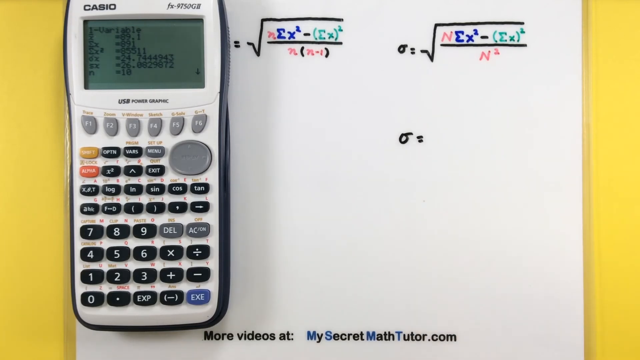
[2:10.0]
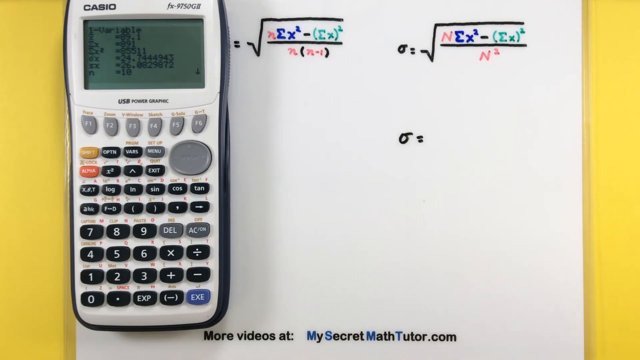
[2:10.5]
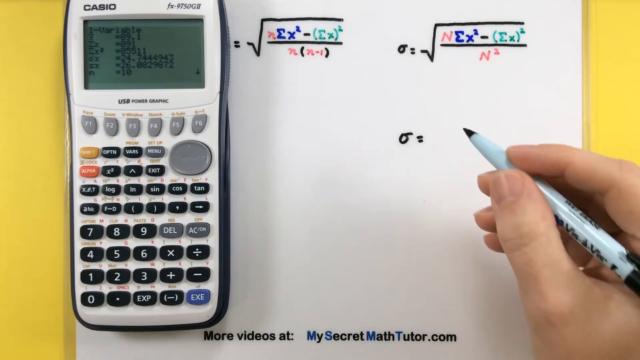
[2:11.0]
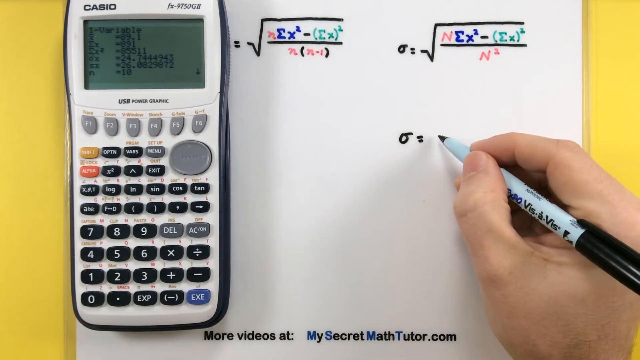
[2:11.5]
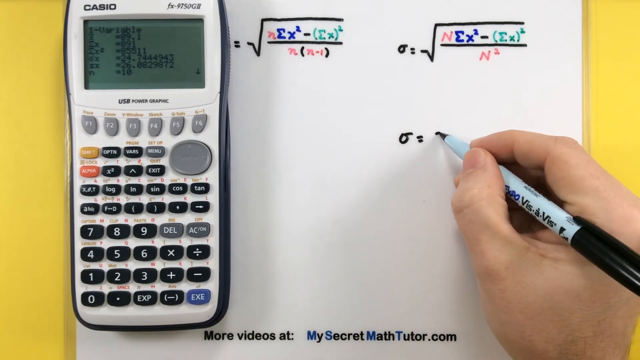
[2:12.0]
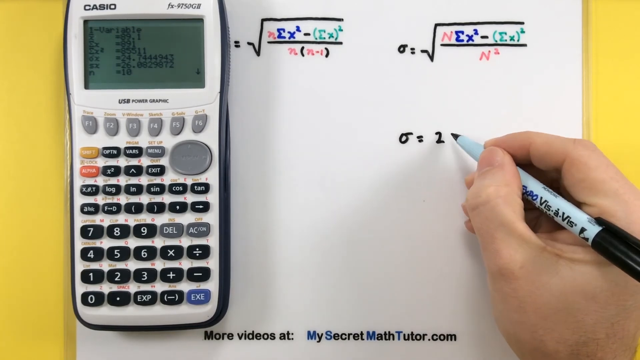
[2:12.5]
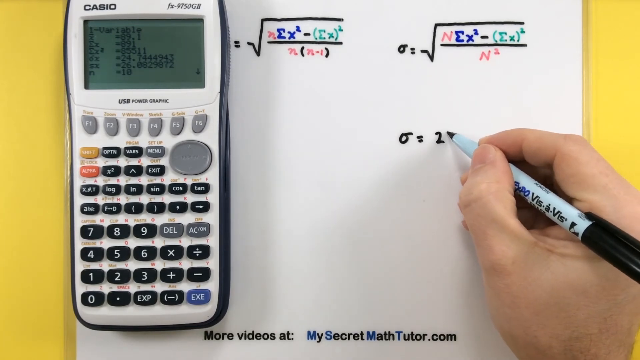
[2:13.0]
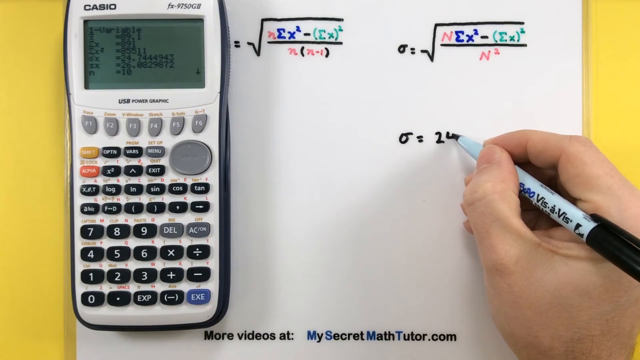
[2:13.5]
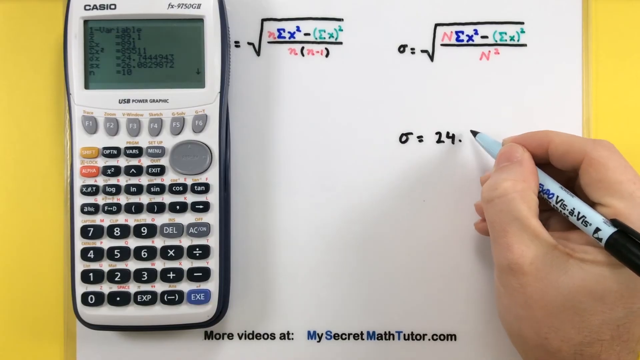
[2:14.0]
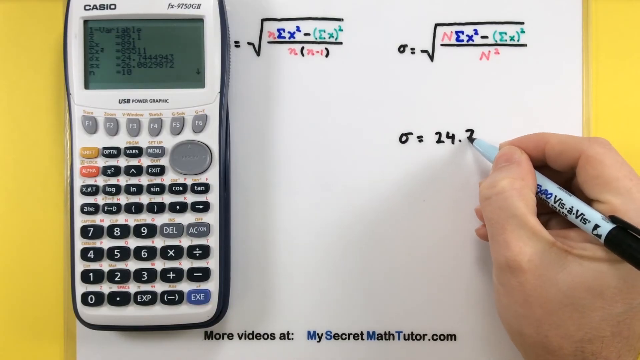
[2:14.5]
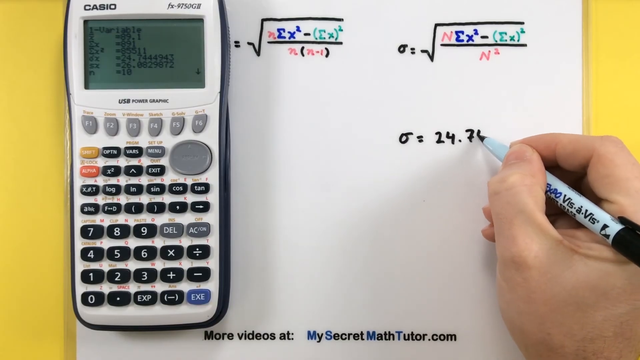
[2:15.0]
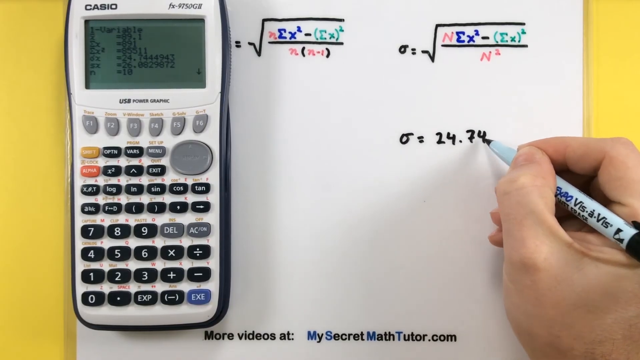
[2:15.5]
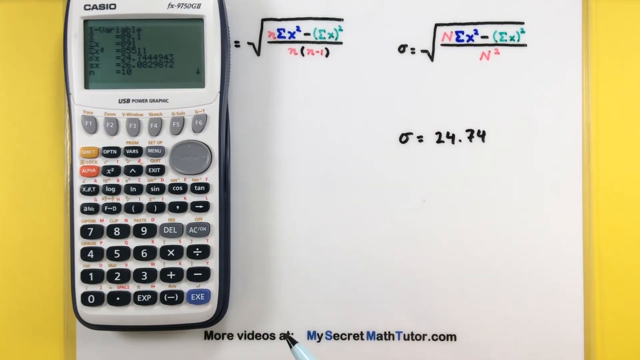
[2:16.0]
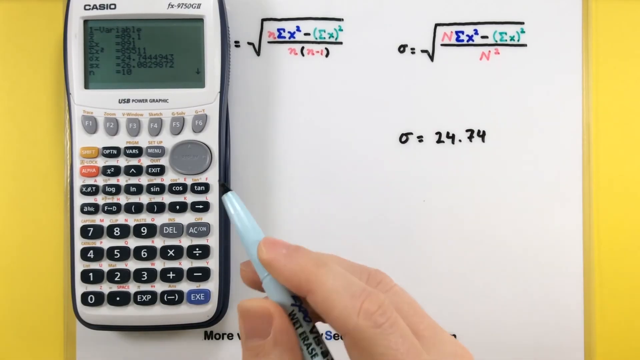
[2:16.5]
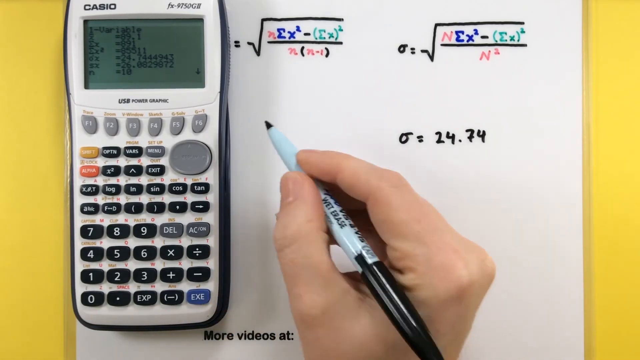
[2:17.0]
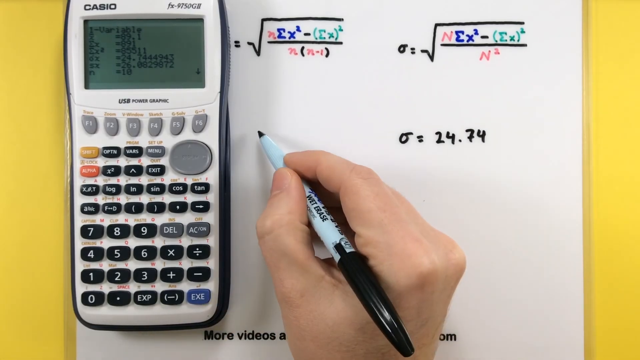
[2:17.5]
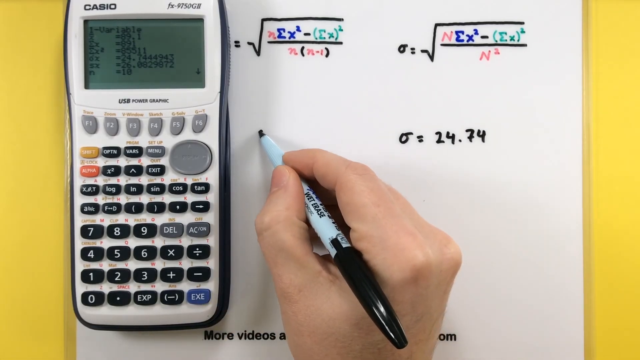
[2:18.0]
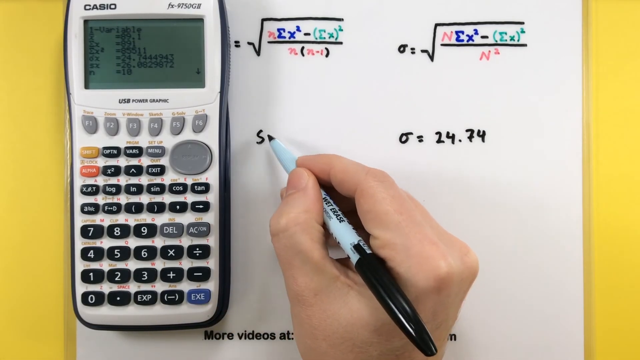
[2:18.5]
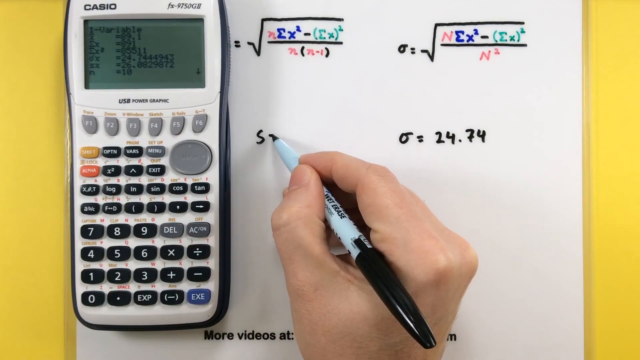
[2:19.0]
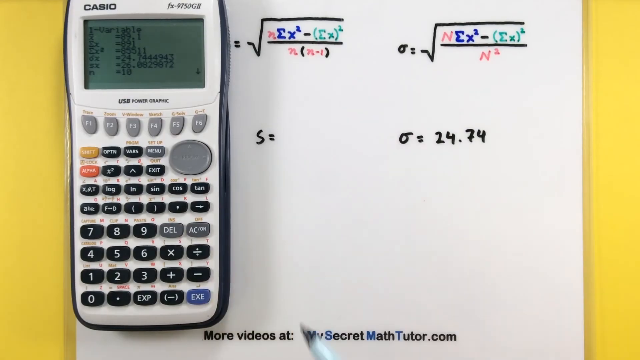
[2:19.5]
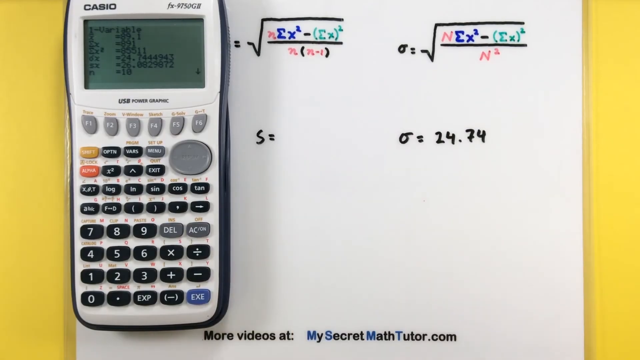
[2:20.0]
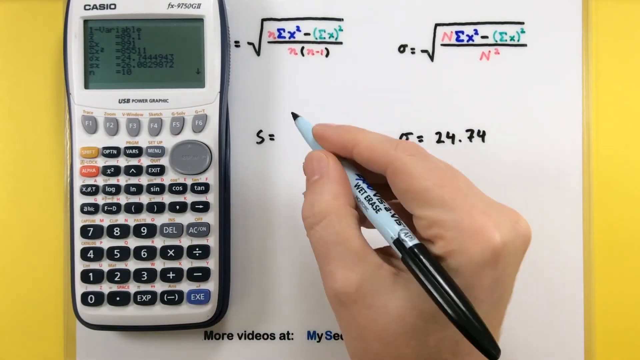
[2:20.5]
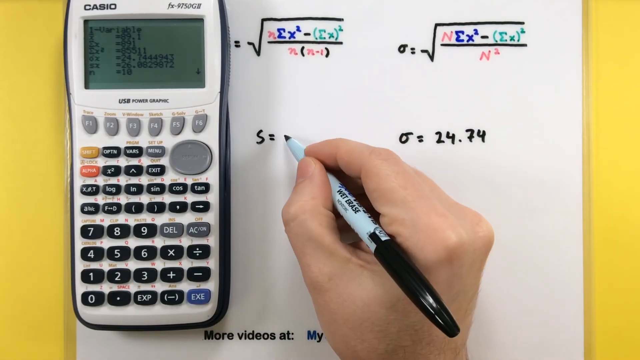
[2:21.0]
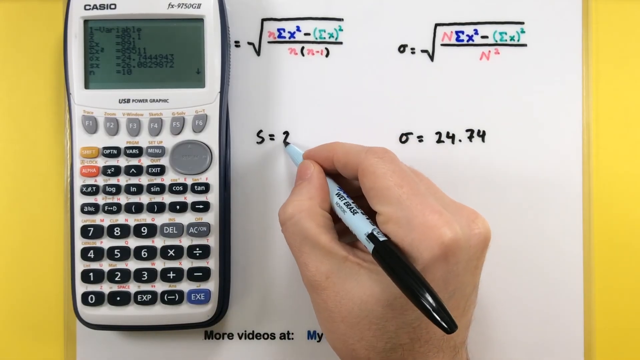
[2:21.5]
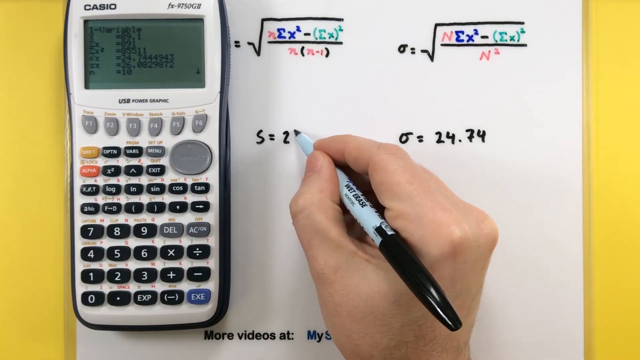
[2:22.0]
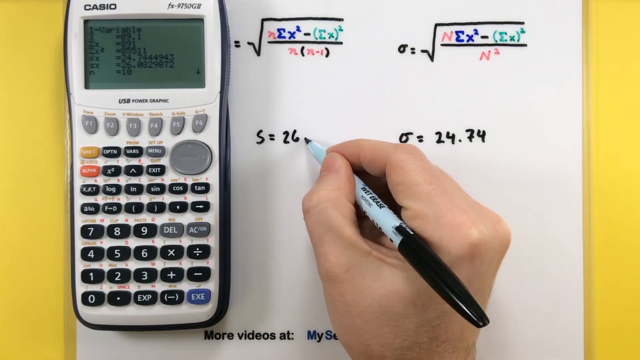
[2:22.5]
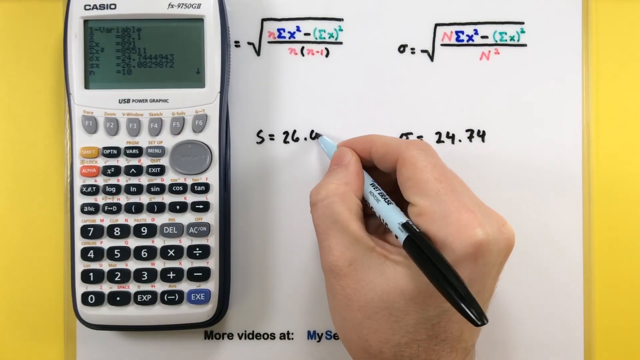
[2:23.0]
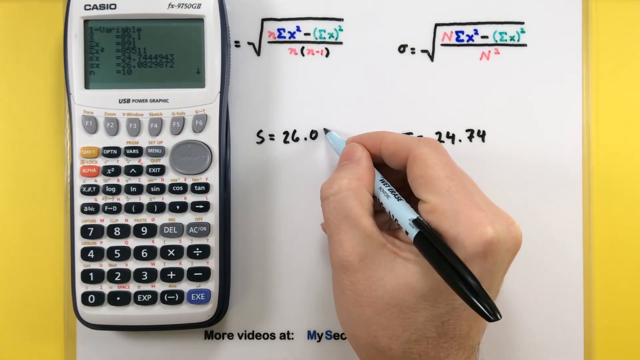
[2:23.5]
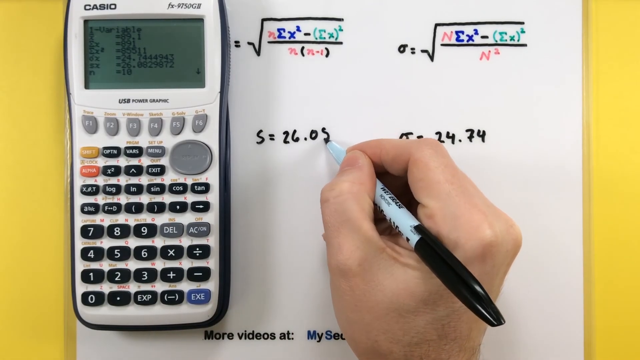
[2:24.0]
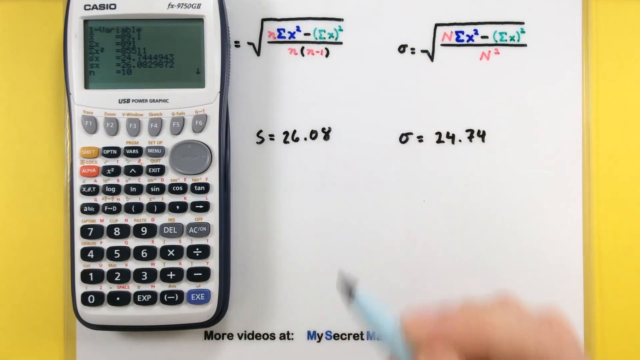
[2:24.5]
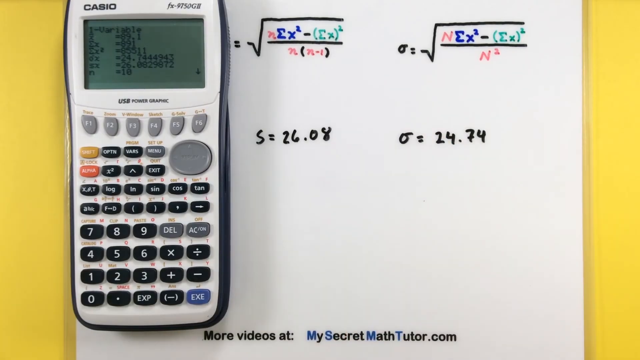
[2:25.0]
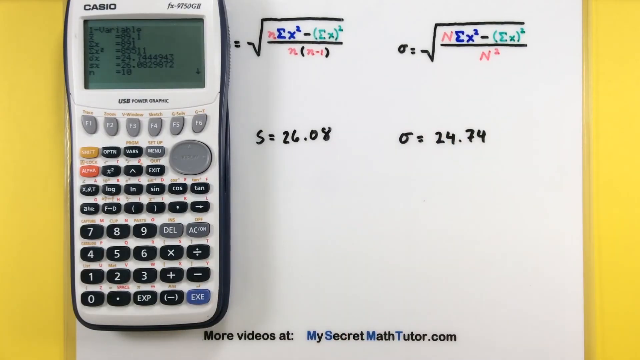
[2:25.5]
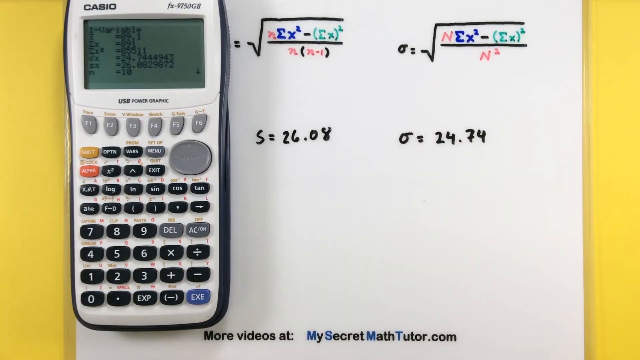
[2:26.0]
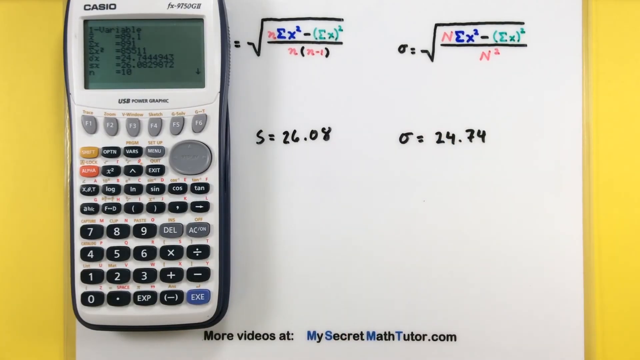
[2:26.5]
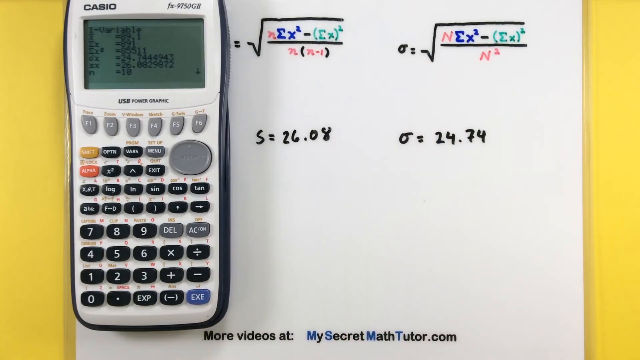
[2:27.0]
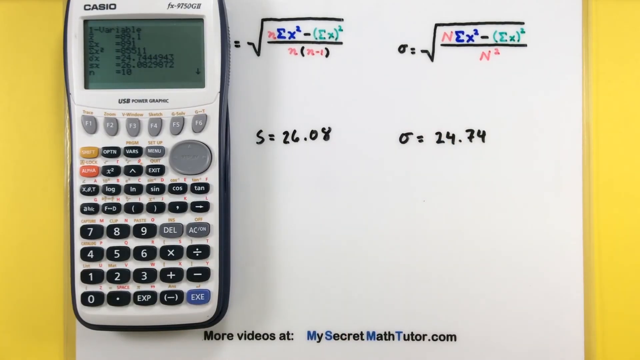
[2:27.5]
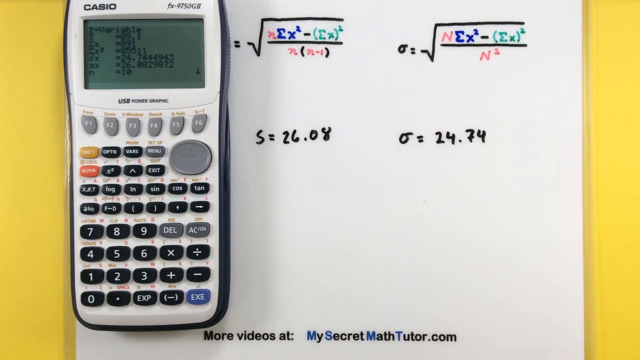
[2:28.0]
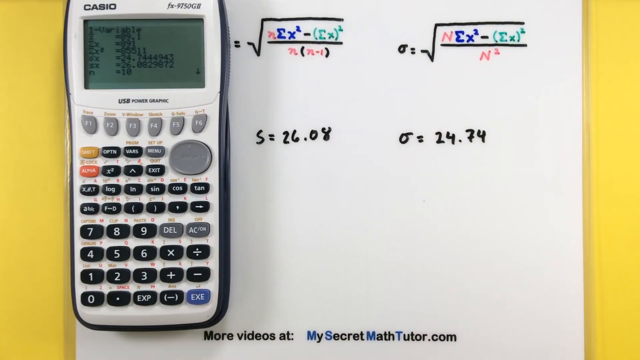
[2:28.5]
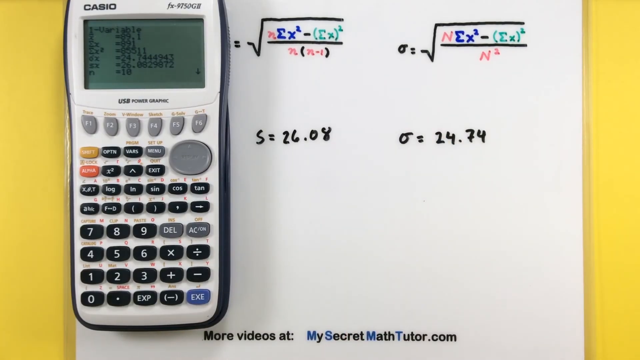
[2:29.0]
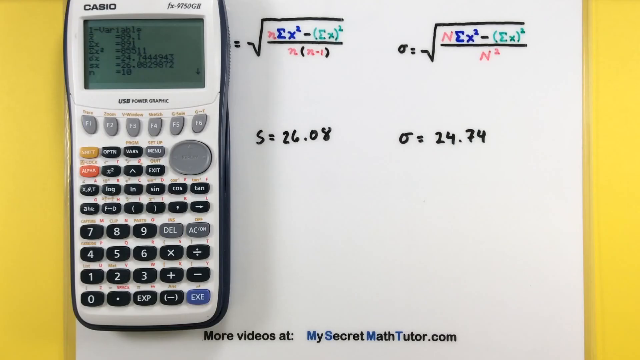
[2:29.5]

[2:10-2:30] A laminated white piece of paper rests on a yellow desk, with a Casio calculator on top of it. The calculator is turned on and its screen shows various values; there is no backlight, the screen is green and the values are in black. The calculator has a white face, mostly black buttons and gray function buttons. Equations are written on the paper. A hand on the paper holds an uncapped black marker and begins to write, writing down "omega equals 24.74" and then beginning to write "S equals 26.08".